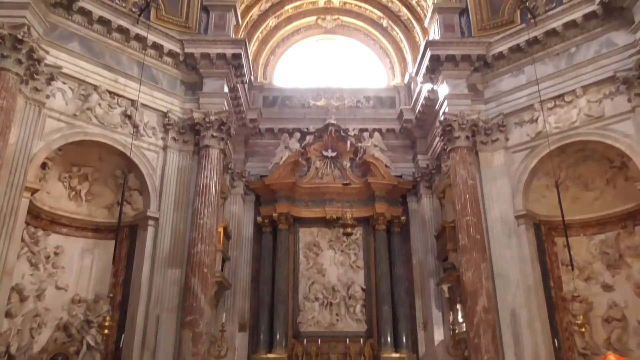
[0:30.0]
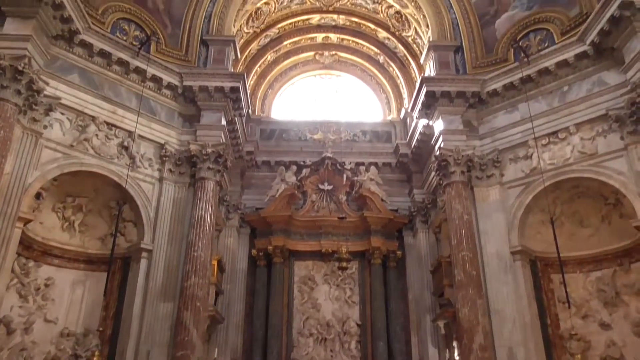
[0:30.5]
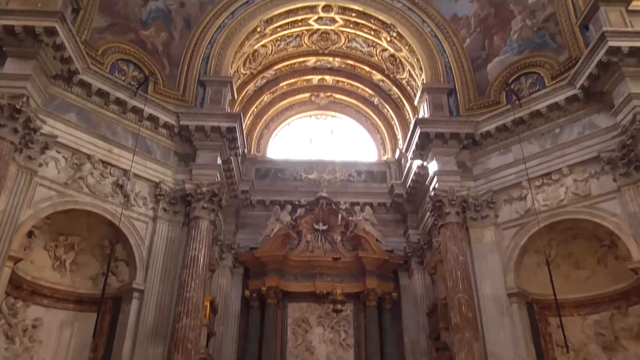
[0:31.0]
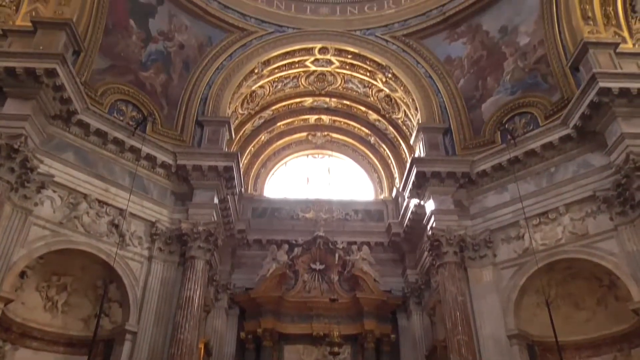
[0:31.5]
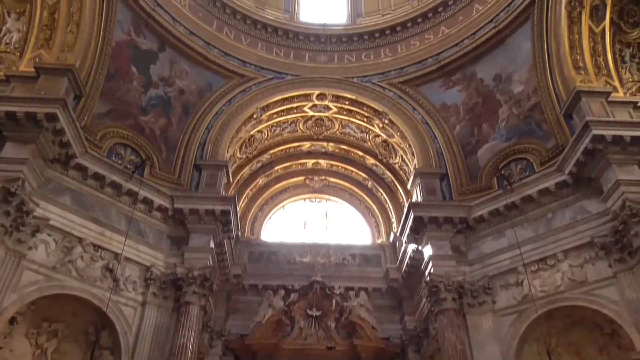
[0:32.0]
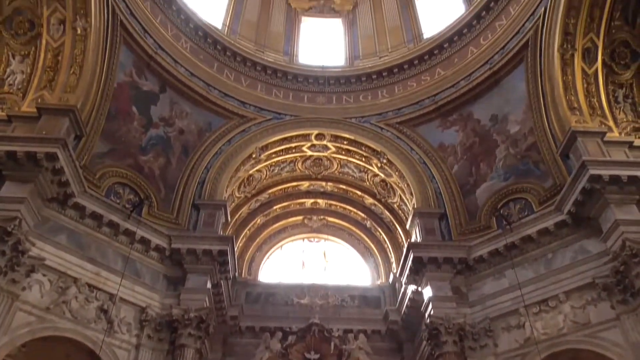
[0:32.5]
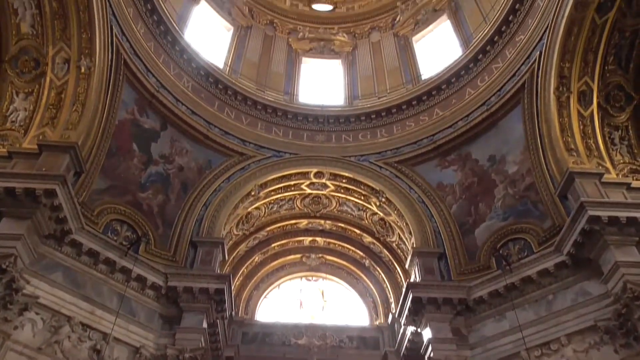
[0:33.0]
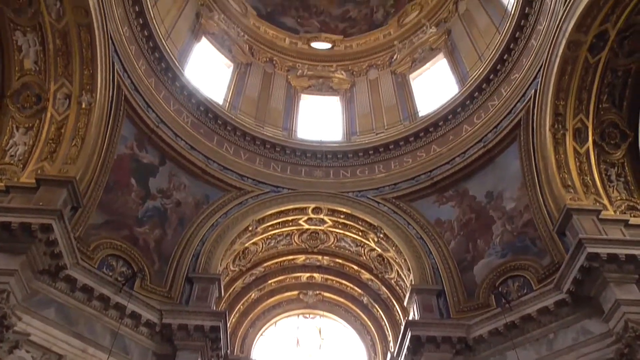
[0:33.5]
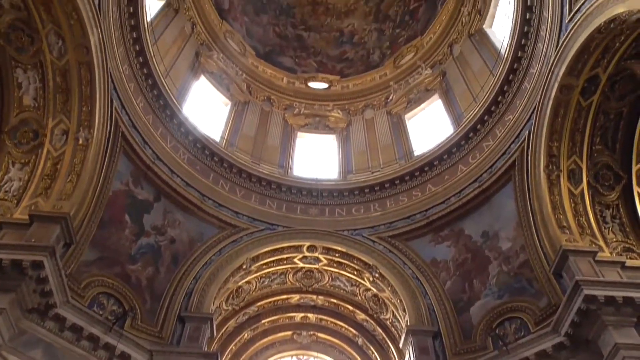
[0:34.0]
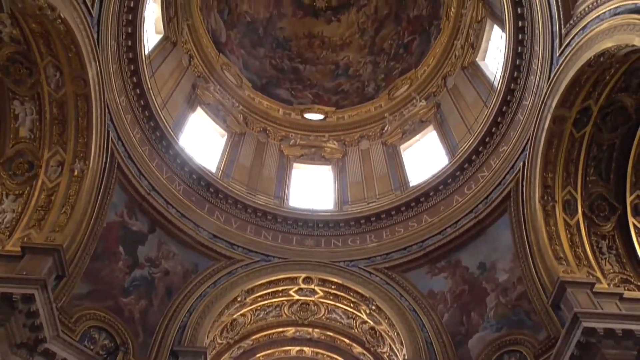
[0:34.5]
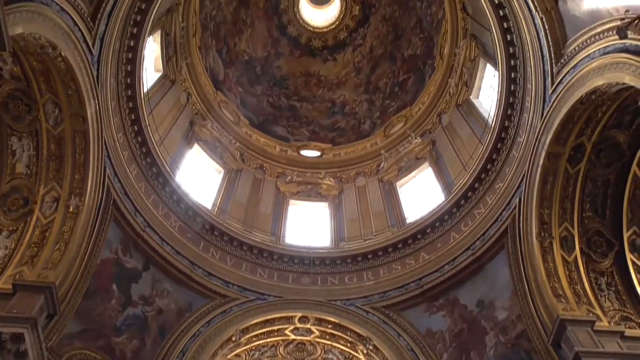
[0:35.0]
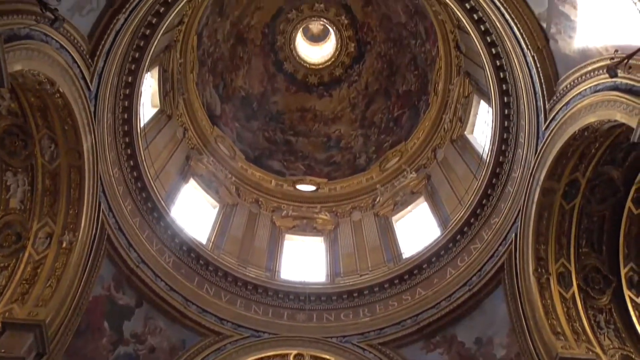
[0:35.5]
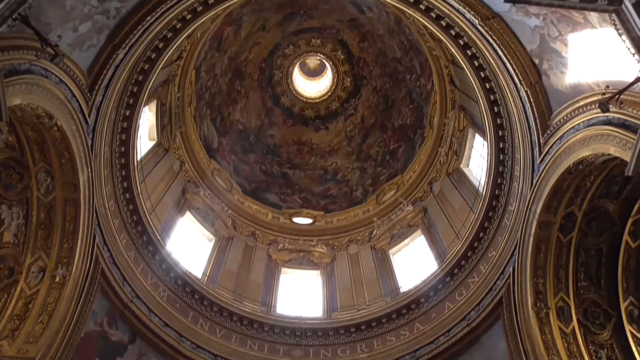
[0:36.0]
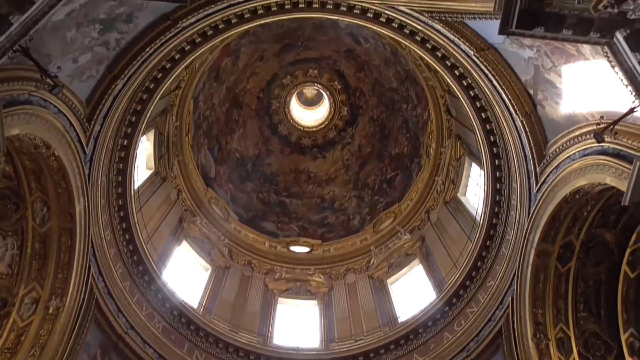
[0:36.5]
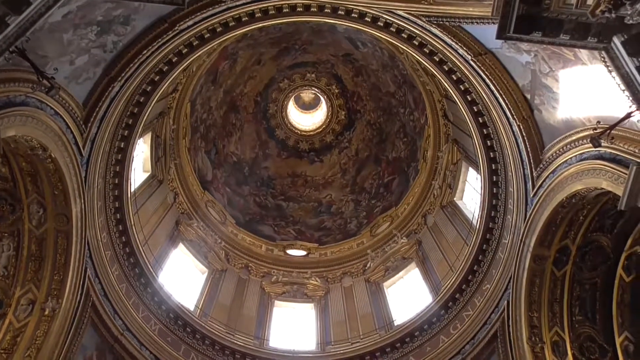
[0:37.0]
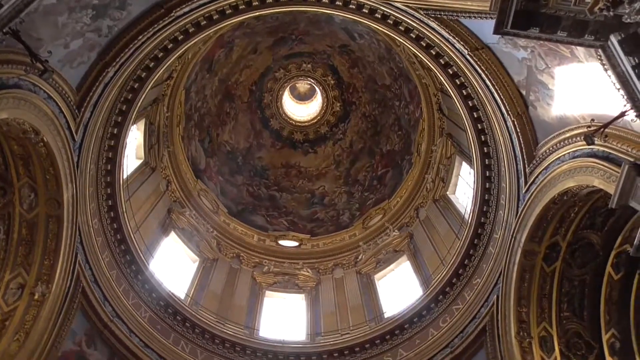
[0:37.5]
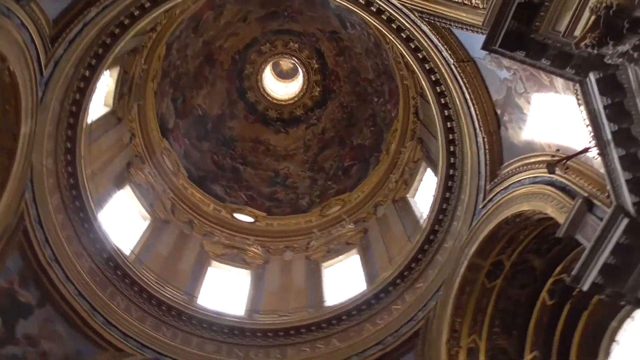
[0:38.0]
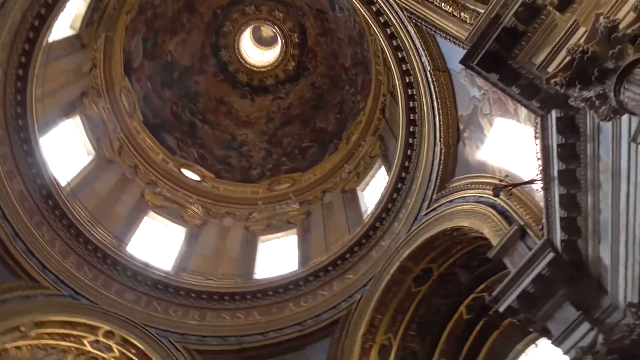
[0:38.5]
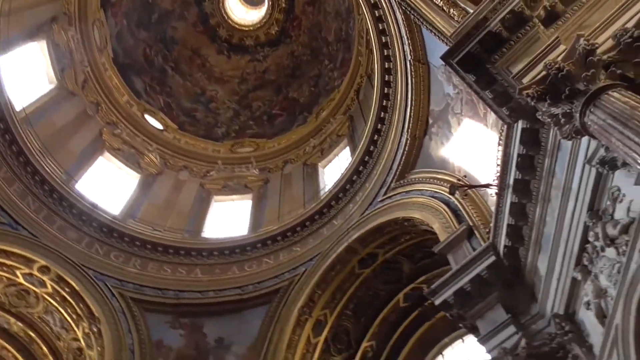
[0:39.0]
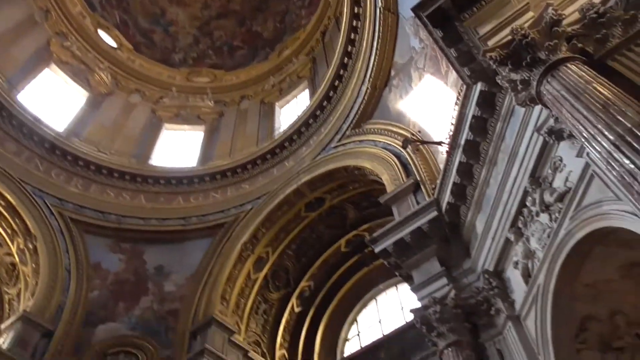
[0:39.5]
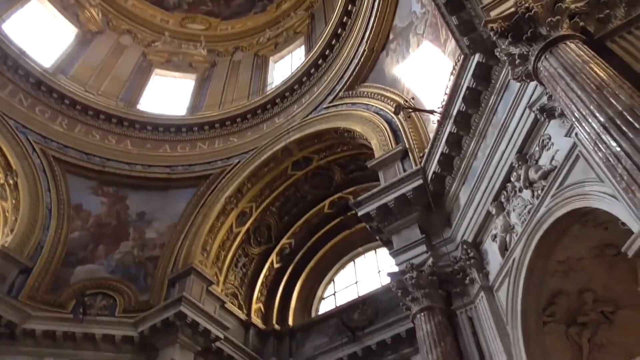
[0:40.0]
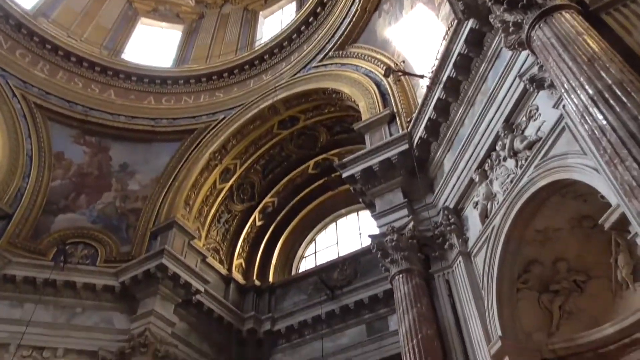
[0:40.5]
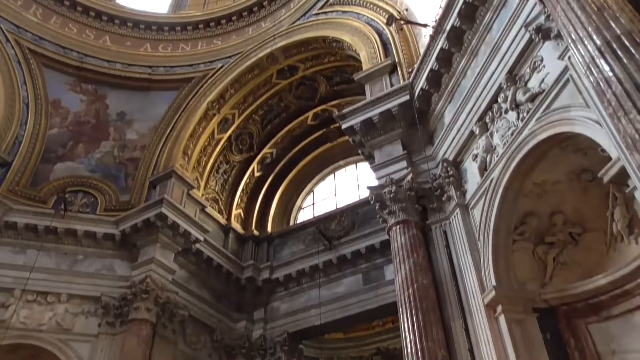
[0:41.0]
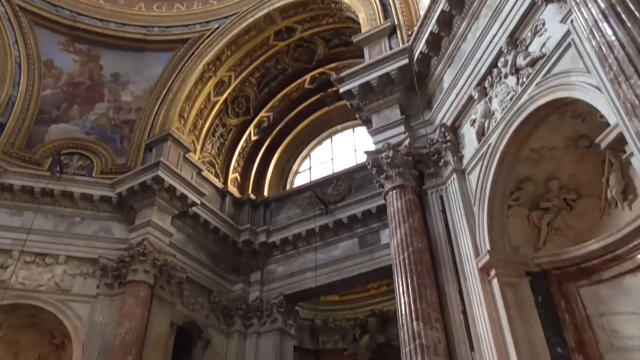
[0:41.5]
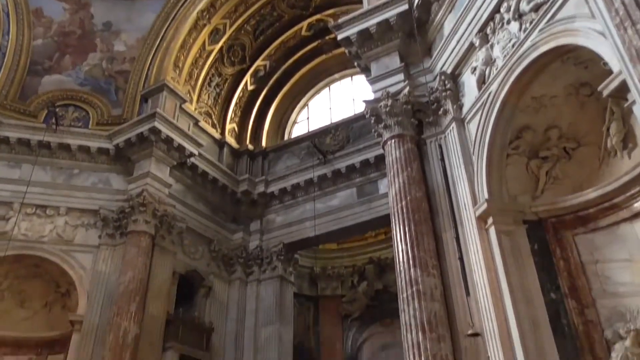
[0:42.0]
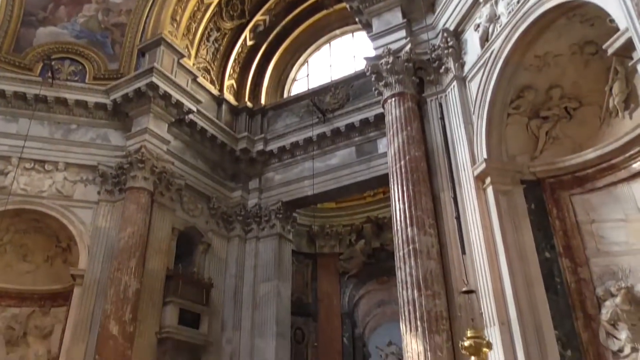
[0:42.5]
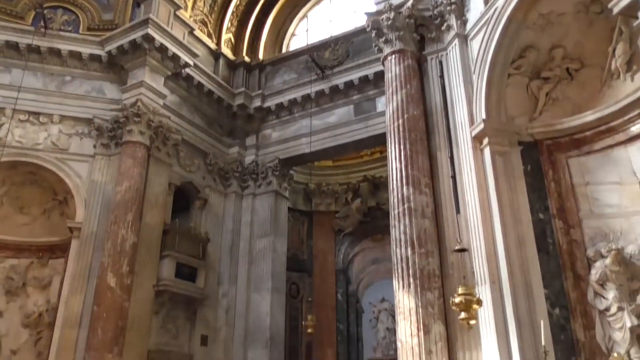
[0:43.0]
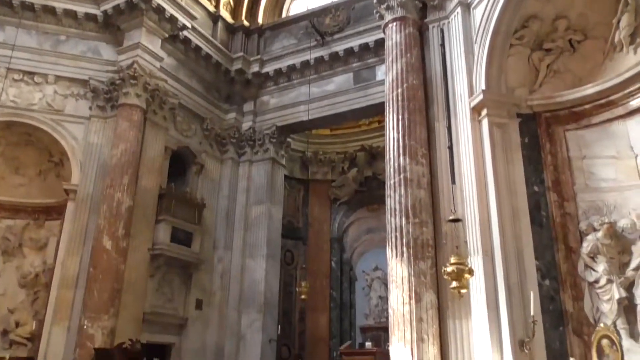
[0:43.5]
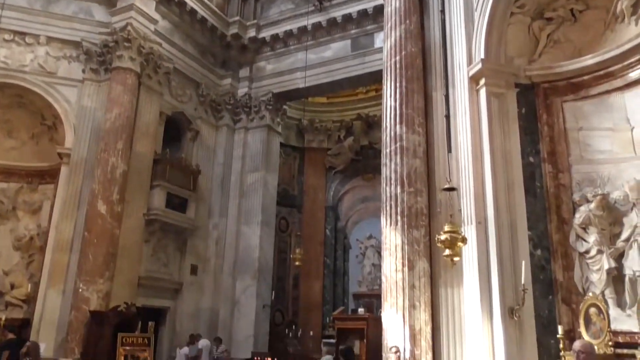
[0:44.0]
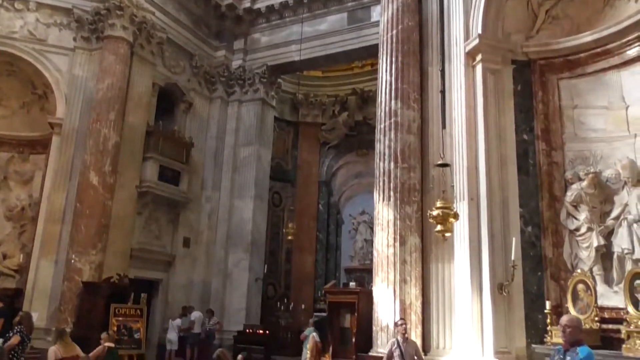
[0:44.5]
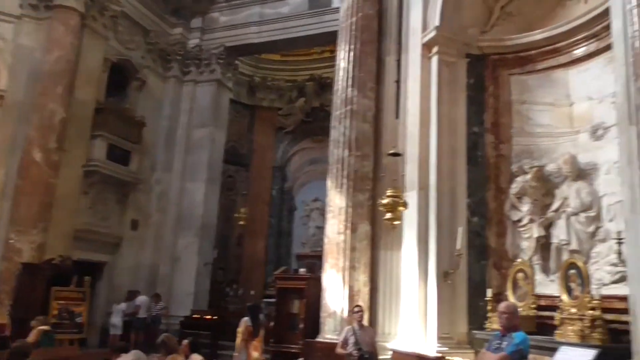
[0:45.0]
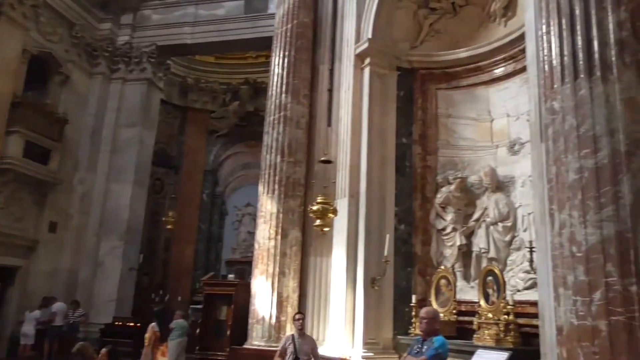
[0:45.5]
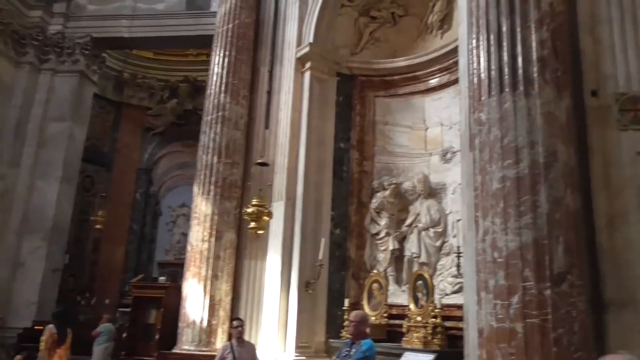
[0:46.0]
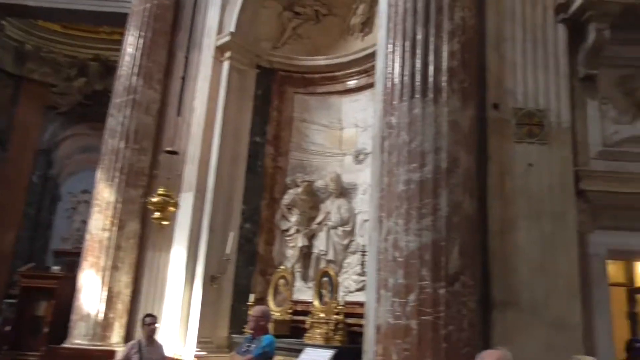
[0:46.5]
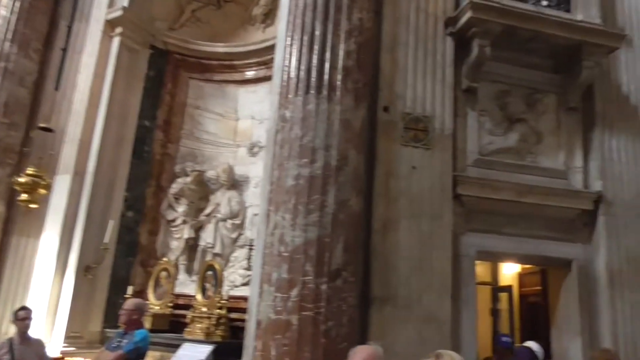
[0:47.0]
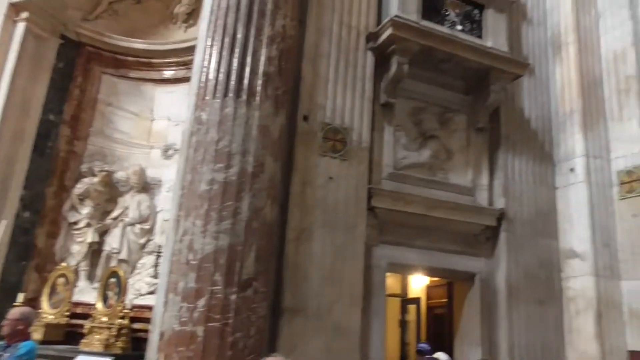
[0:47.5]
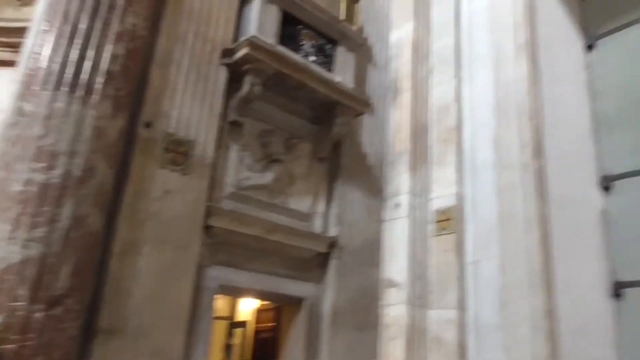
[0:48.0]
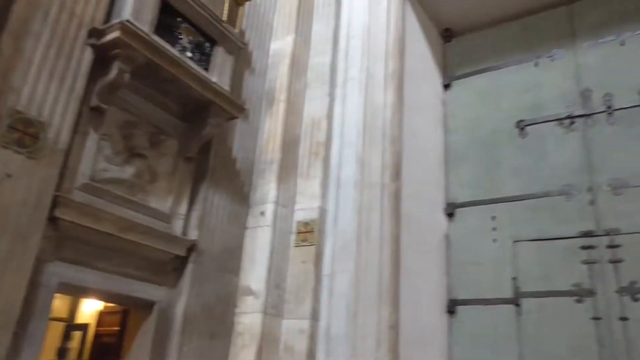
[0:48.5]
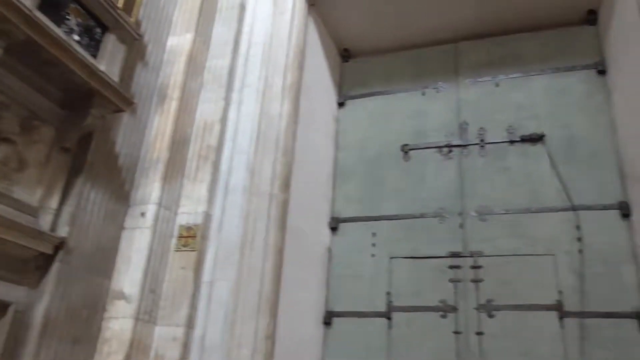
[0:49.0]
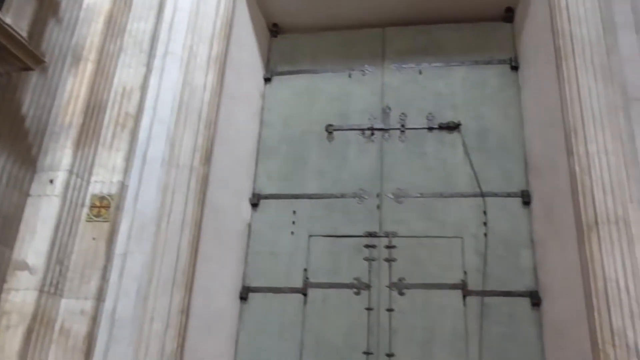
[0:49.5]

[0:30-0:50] The video opens on ornate scroll work inside a building with a European look, somewhat Renaissance or medieval. What look like fresco paintings are set toward the ceiling. The camera pans upward toward the top, where there might be a saying in Latin around the top dome. Windows with ornate gold scroll work have sunlight streaming in through them. The camera slowly pans upward showing the ceiling, then pans back down. Cherub-like figures and statues are visible, and people mill about; it looks like a popular tourist destination. Next comes an inside view of a very large, ornate, delicate-looking door. Sunlight hits the gold around some of the windows. Columns run all the way down, and there also appear to be various portraits around, seemingly of a tabletop kind, ornate in style.